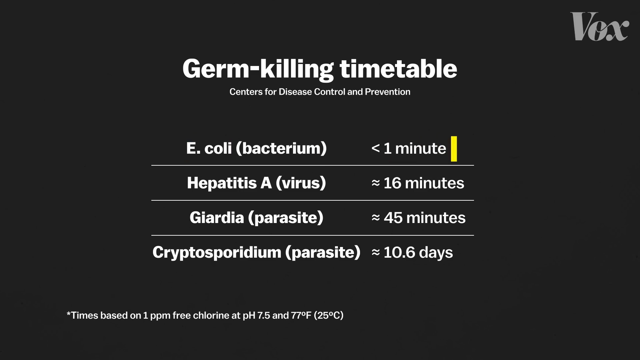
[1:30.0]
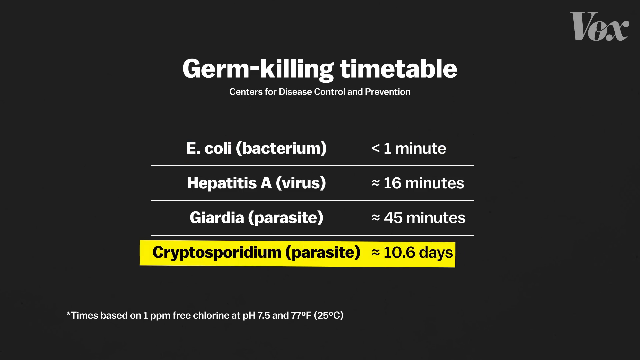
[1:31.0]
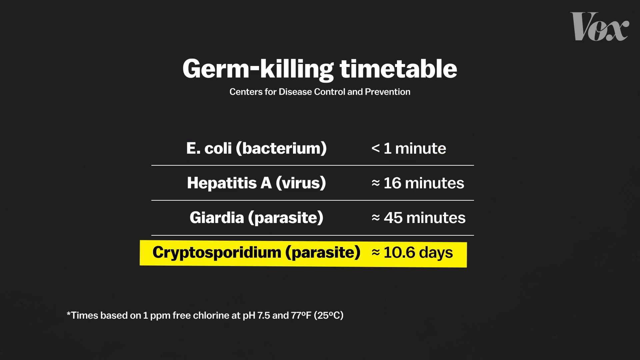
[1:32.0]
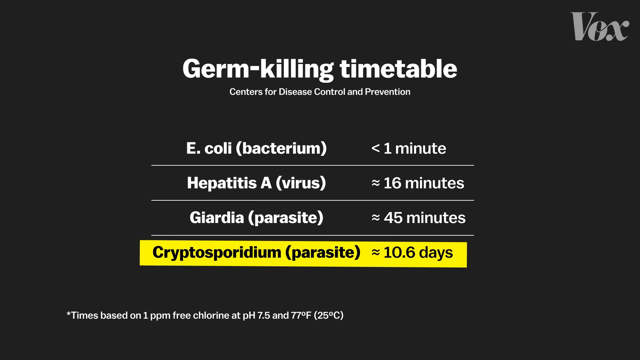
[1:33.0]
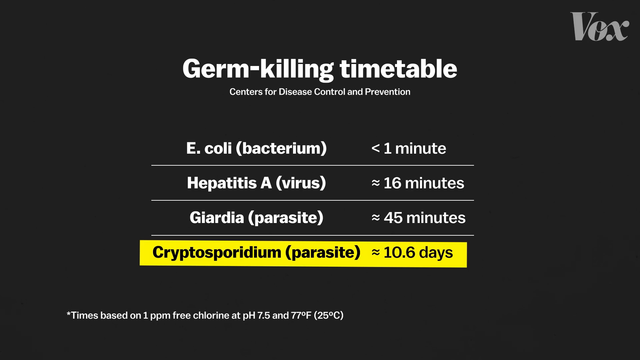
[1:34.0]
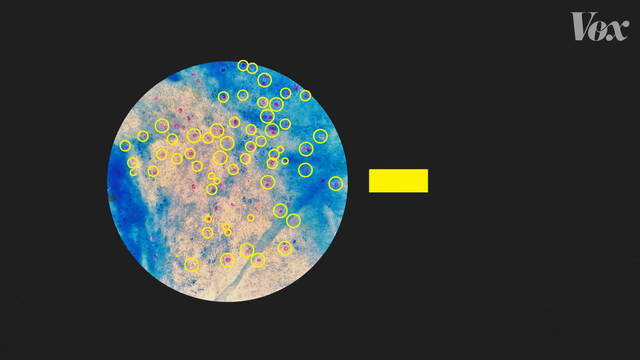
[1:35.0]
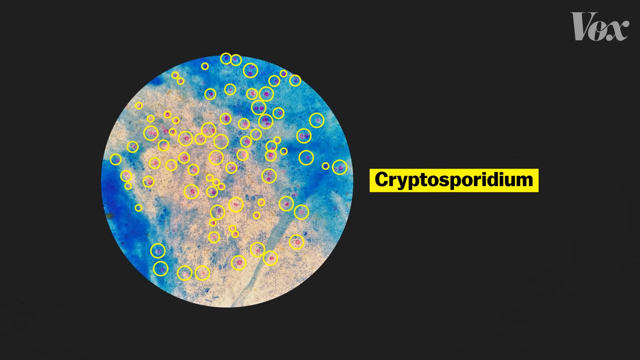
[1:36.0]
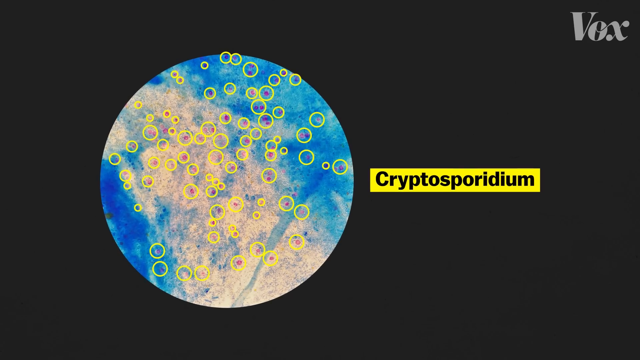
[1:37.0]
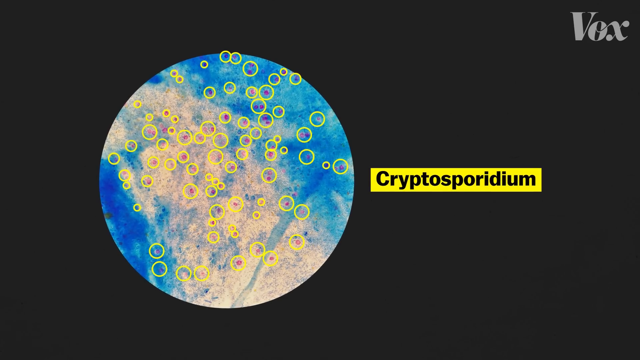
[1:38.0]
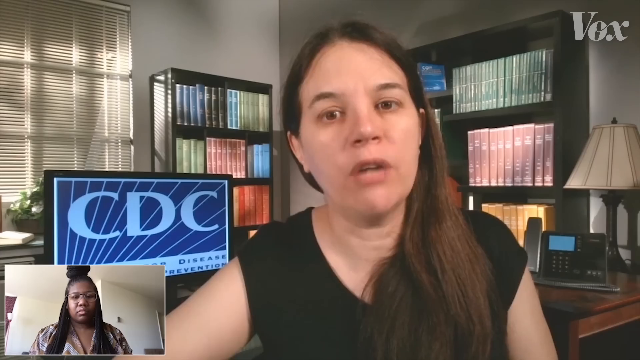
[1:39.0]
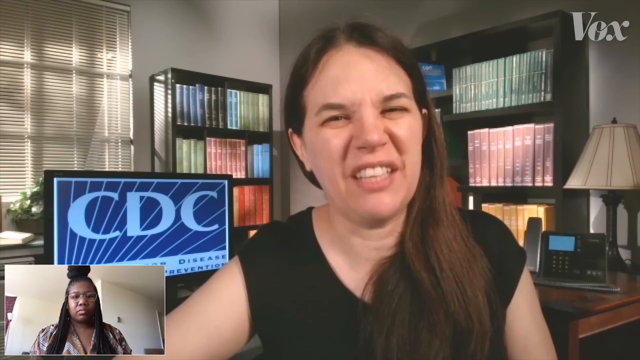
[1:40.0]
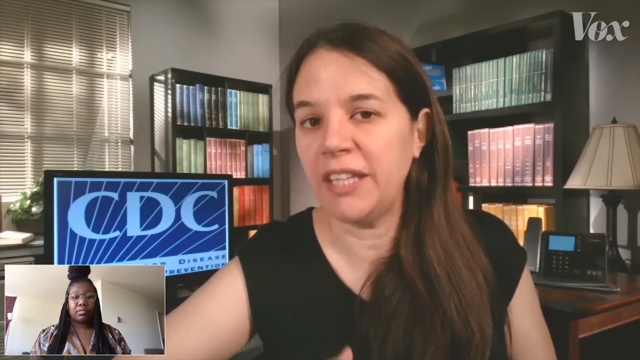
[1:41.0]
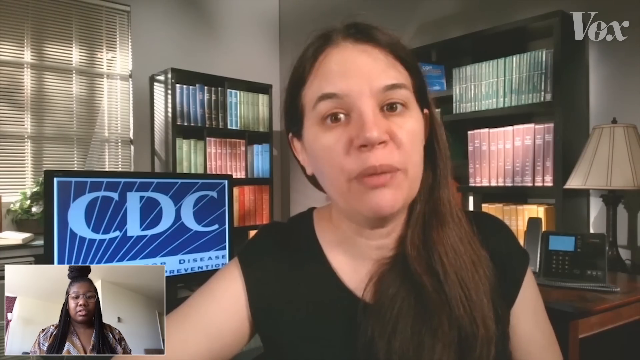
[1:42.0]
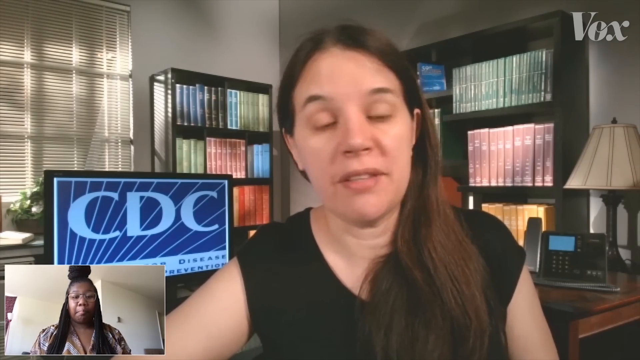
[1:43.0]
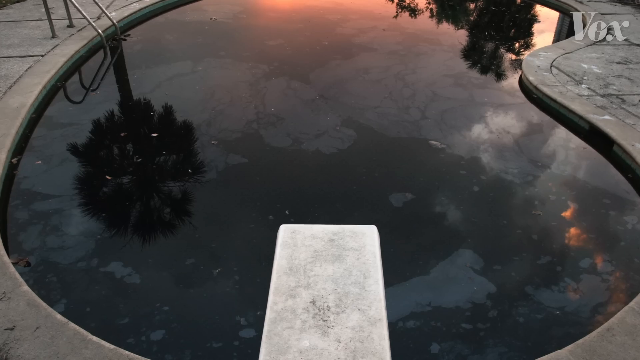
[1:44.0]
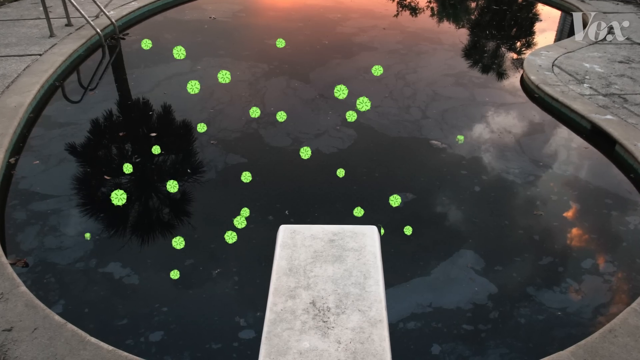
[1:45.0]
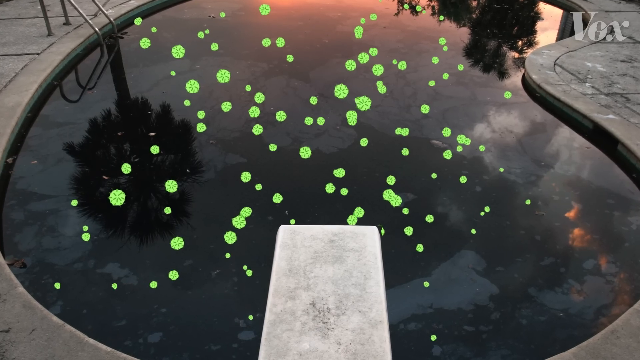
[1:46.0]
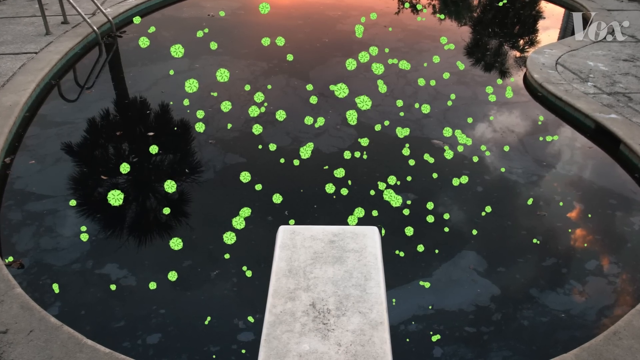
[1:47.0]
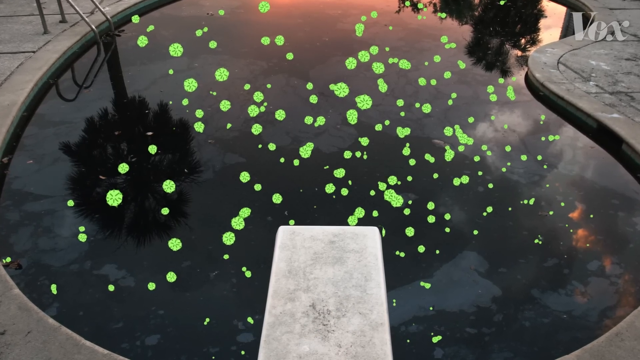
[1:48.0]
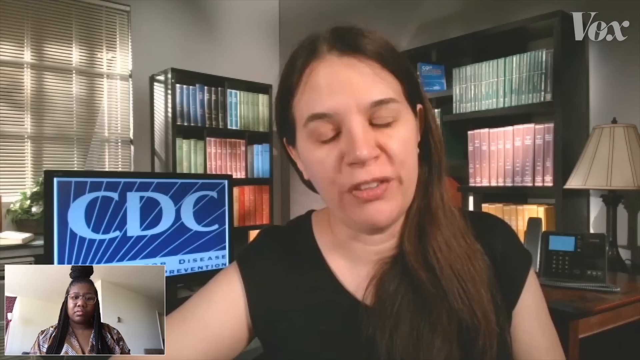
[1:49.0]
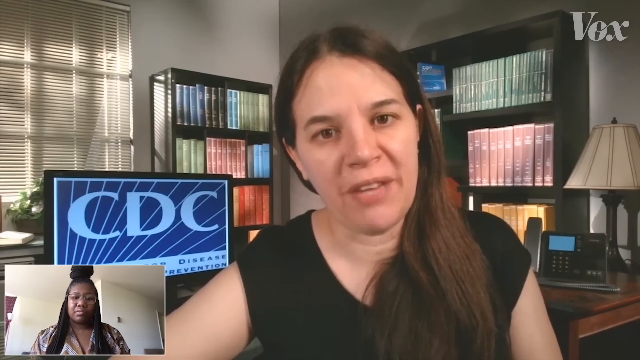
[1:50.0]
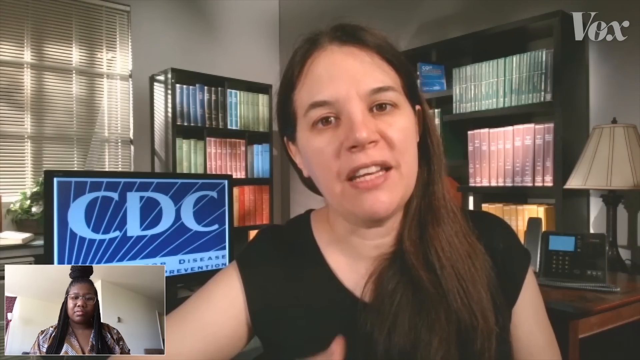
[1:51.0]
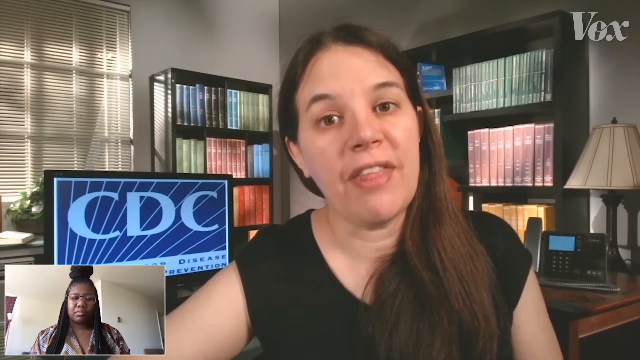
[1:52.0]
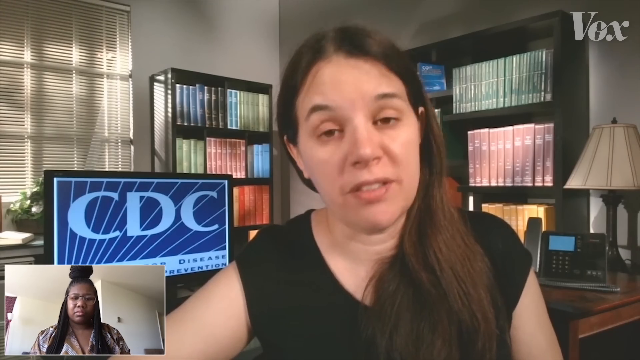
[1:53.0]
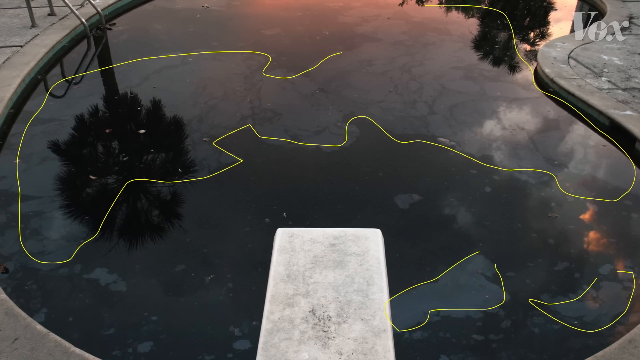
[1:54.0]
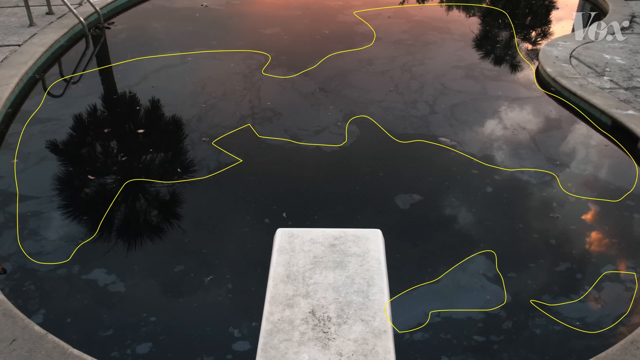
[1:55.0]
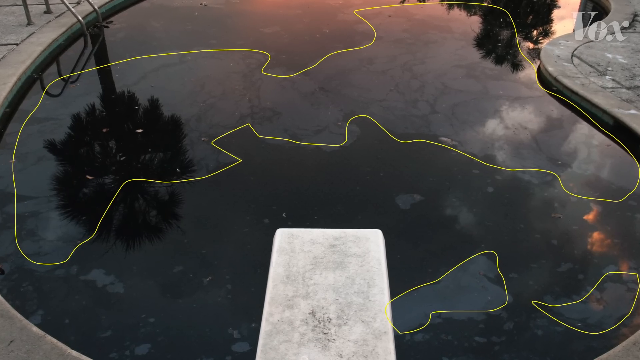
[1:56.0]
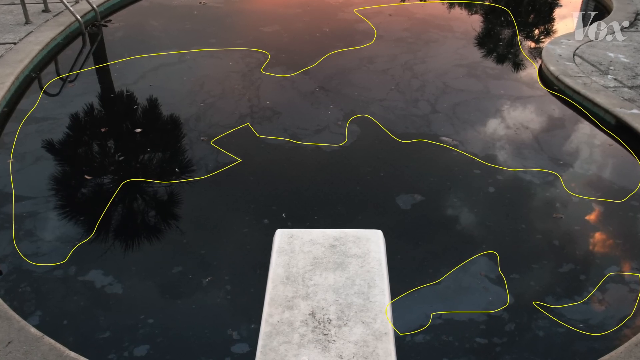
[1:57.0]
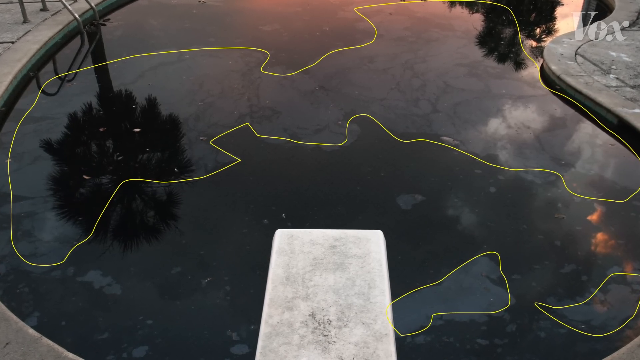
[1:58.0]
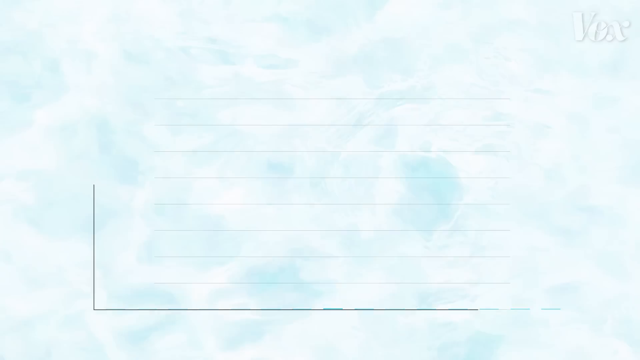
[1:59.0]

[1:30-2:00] On the black background, the germ killing timetable from the Centers for Disease Control and Prevention lists "E. coli bacterium," "hepatitis A virus," "giardia parasite" and "cryptosporidium parasite" with their timetables. Next, on a black screen, a large multicolored circle with blues and whites appears on the left, with yellow circles on it. The video returns to the woman from the Centers for Disease Control speaking, with "CDC" on the computer screen behind her; in the bottom left corner another woman is on a call with her, talking to her. A different screen shows a pool with what looks like dark black water, and green dots start populating the screen. The video goes back to the woman from the CDC speaking, then back to the pool with the black water, where an outline appears.